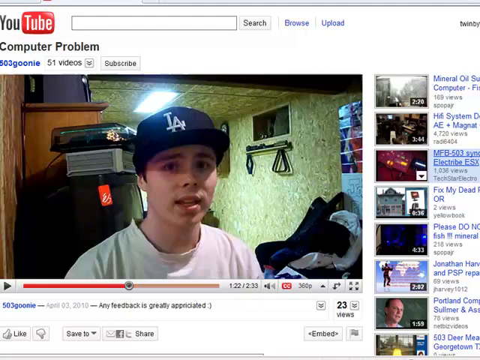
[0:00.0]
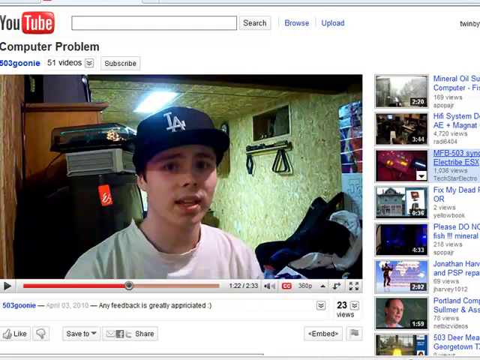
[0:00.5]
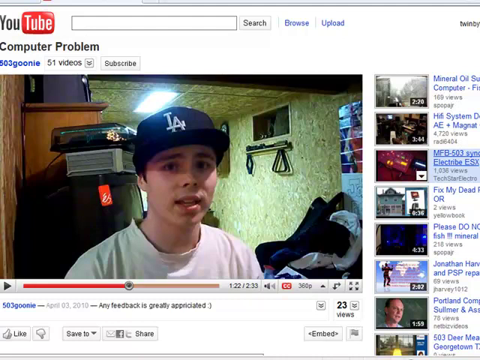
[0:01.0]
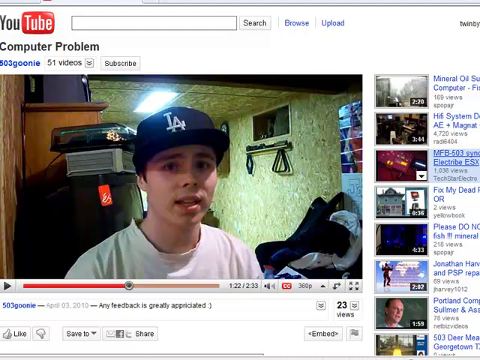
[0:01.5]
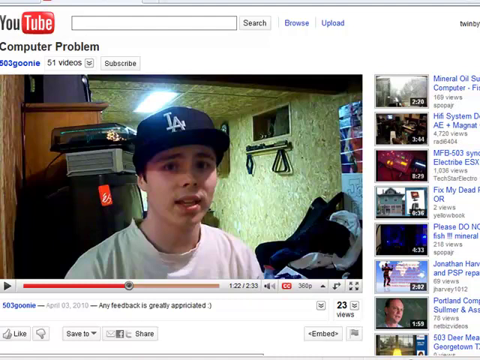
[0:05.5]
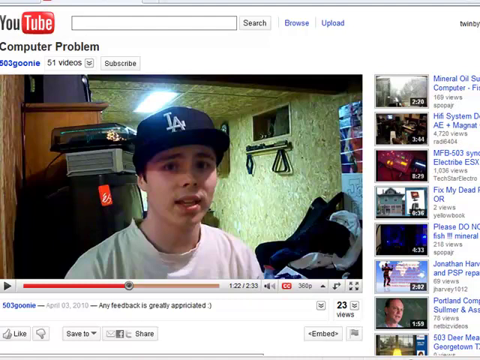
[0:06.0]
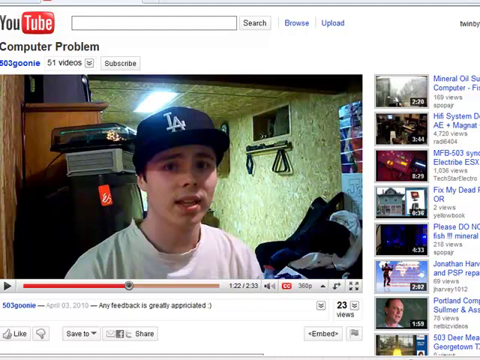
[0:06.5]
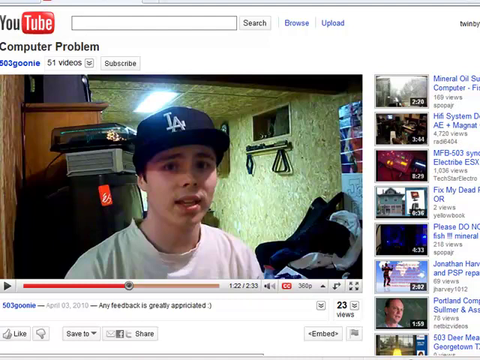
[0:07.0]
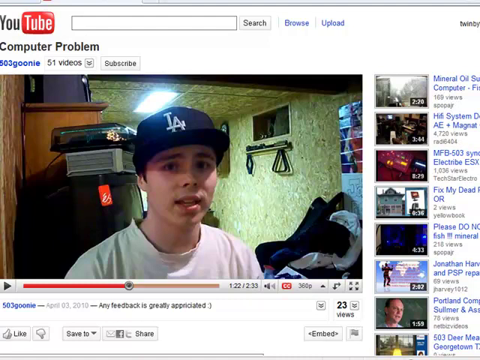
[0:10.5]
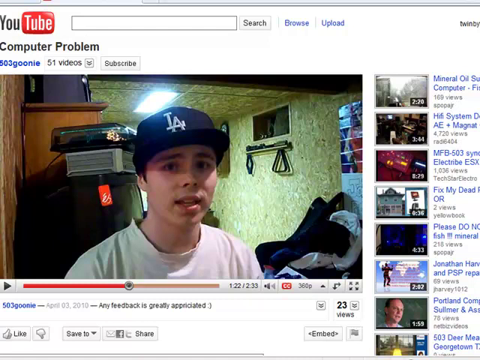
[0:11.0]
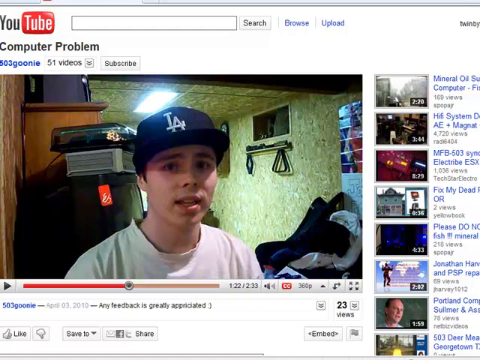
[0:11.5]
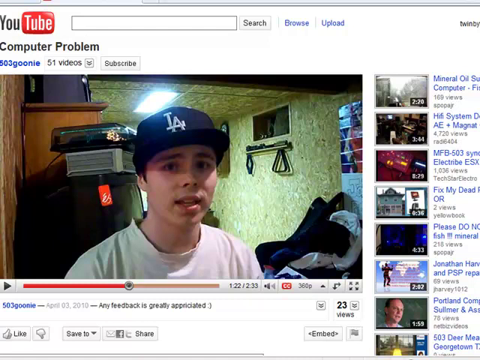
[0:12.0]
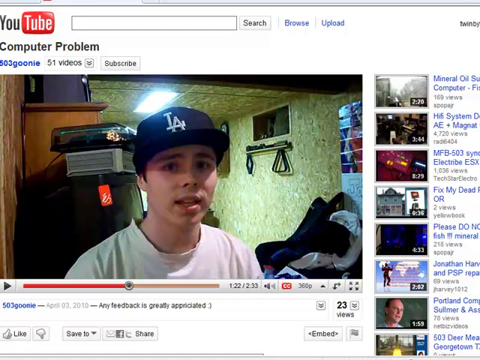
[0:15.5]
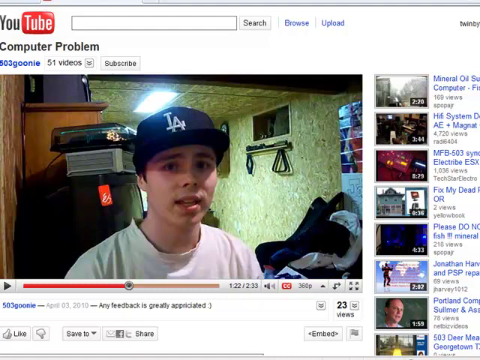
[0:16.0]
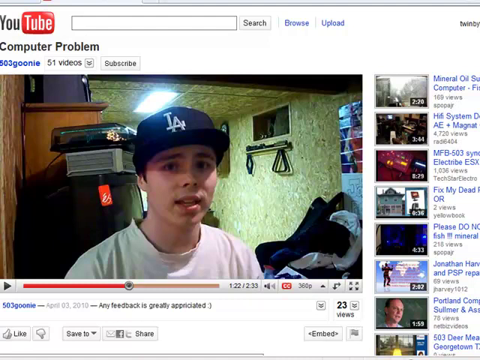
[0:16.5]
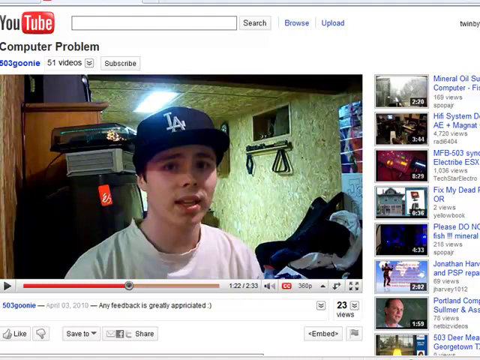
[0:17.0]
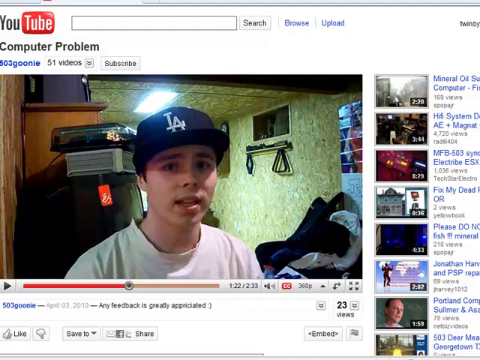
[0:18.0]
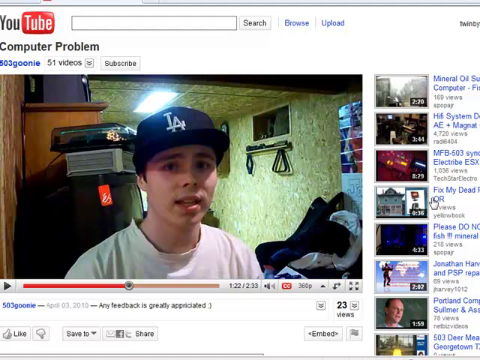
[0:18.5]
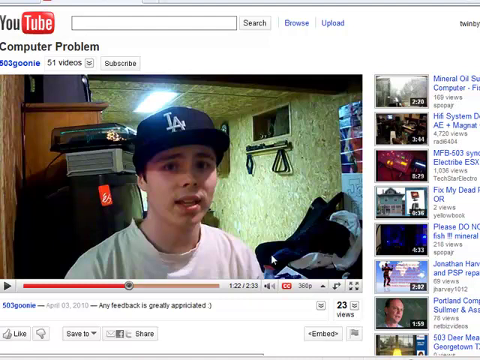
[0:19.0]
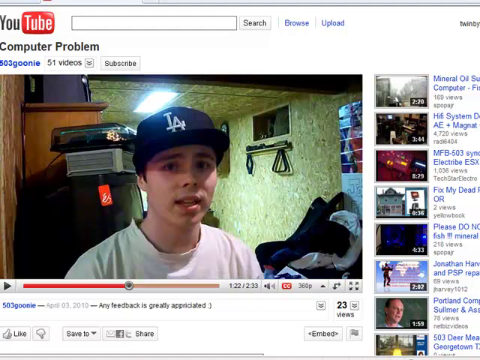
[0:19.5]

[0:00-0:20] For the first 20 seconds the video is a still image with no movement: a screenshot of a YouTube screen featuring a video titled "Computer Problem", paused at about the halfway mark, 1 minute and 22 seconds. The paused frame shows a boy, apparently a teenager, facing the camera in what looks like a basement. He wears a white t-shirt and a black peaked LA cap. Behind him are suitcases and a wood-panelled wall. On the right-hand side of the screen are other suggested YouTube videos, one of which, the third one down, is highlighted. At the very end, a mouse pointer moves from the right-hand side of the screen across to the left-hand side.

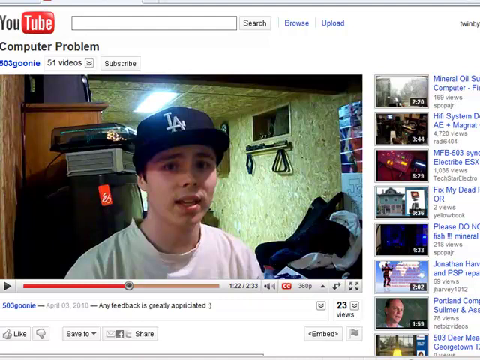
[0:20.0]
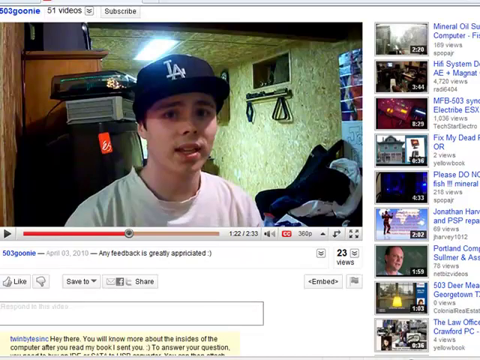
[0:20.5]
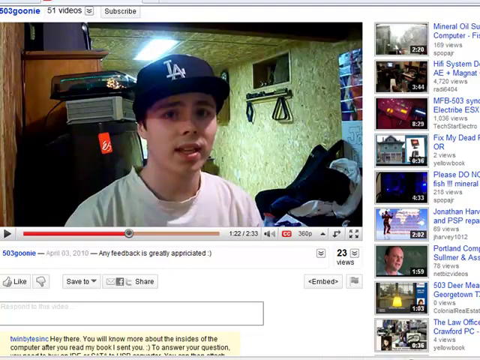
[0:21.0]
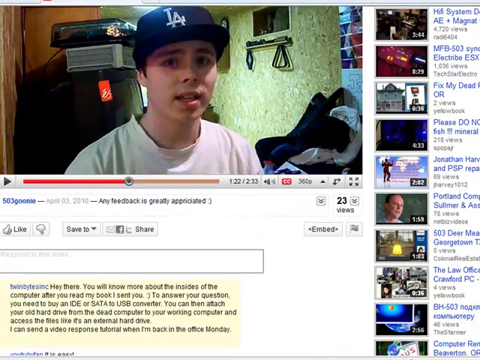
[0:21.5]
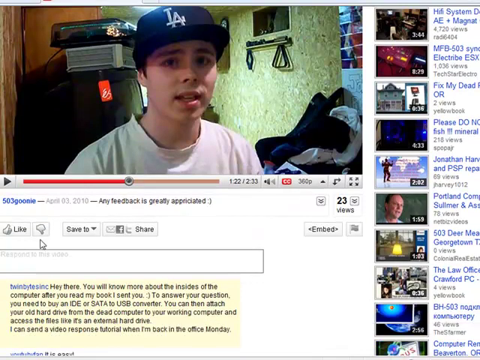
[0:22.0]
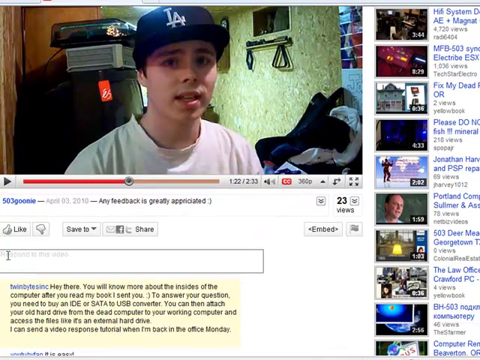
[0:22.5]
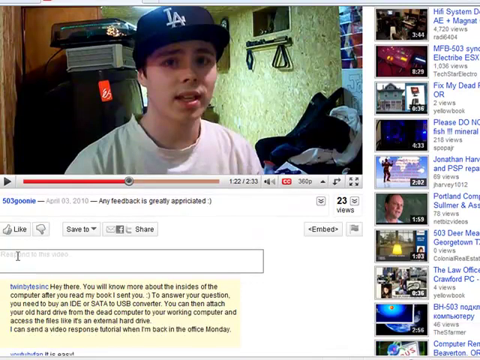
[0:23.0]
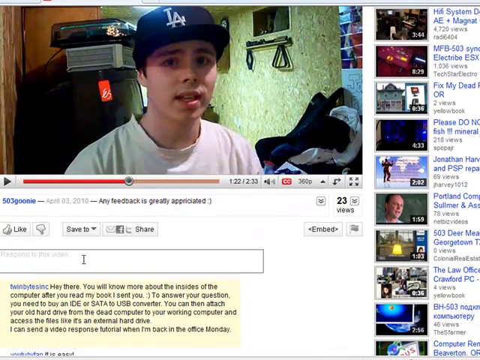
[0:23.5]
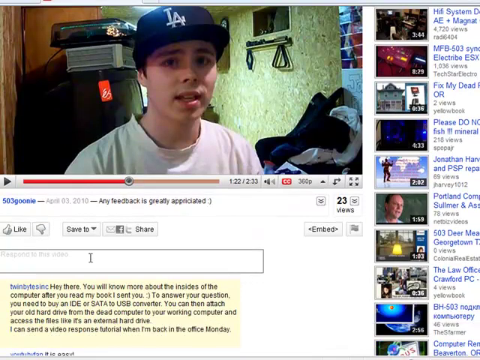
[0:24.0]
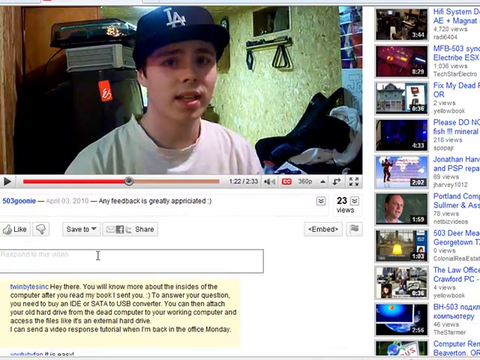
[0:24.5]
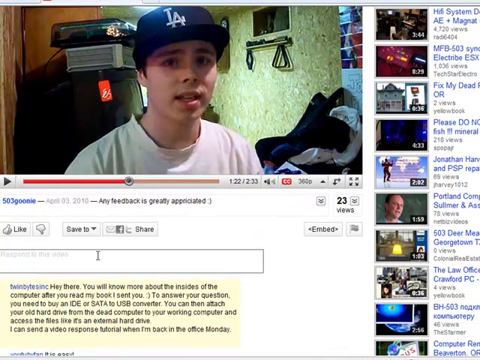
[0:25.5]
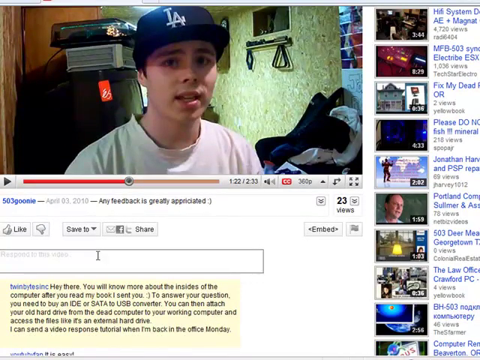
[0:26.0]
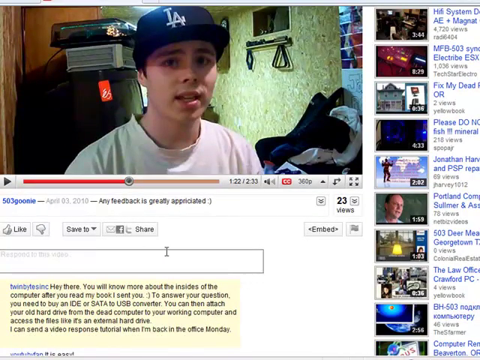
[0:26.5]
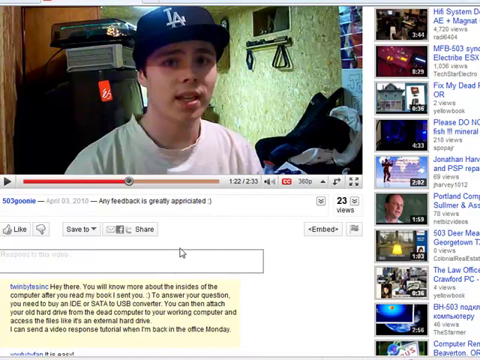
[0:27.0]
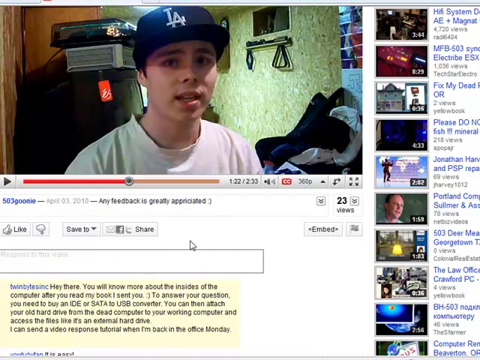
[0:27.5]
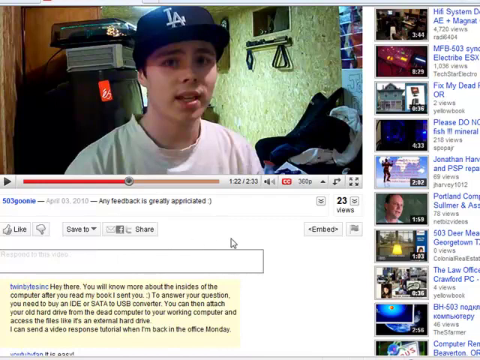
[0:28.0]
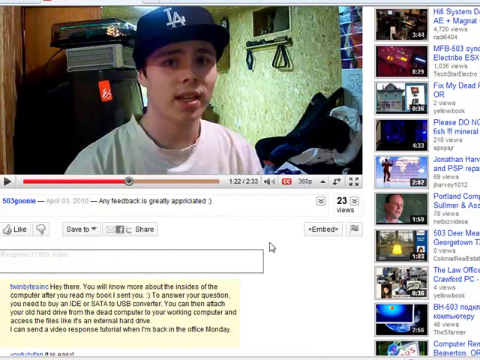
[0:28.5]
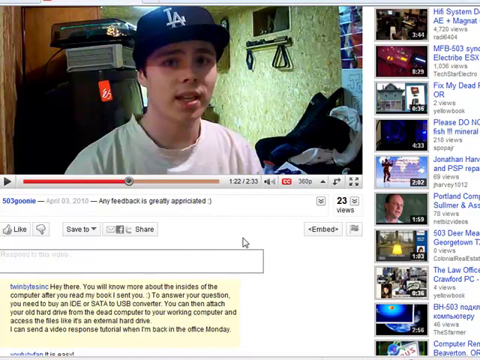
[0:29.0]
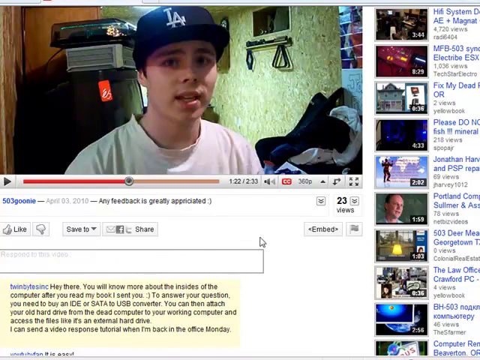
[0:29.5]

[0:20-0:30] The YouTube screen scrolls up a little, with the still image of the young boy still visible. The mouse highlights the comment box where viewers can enter comments. The pointer starts on the left side of the comment box and gradually moves to the right, and when it reaches the right-hand side it makes small back-and-forth movements. Below the comment box is a comment previously entered by another user, highlighted in yellow, which starts with the words "Hey there, you will know more about the insides of the computer after you read my book I send you."